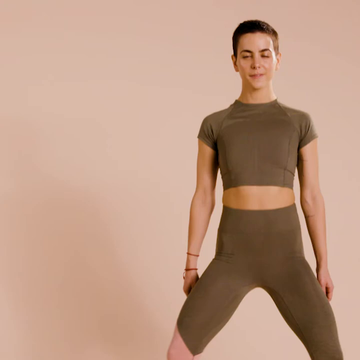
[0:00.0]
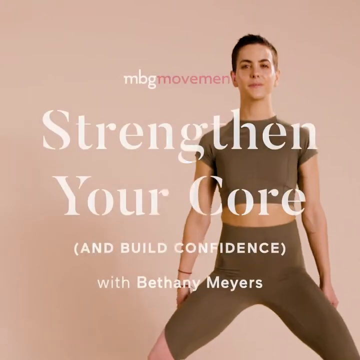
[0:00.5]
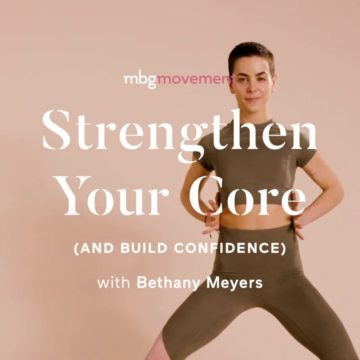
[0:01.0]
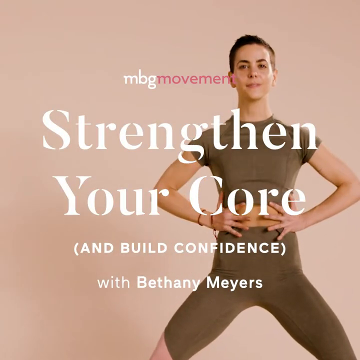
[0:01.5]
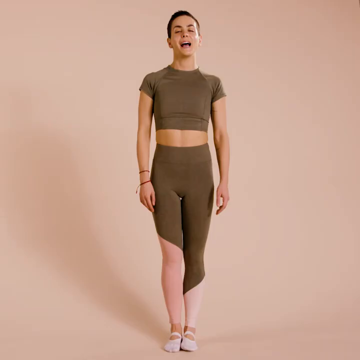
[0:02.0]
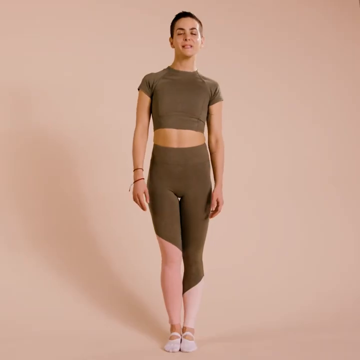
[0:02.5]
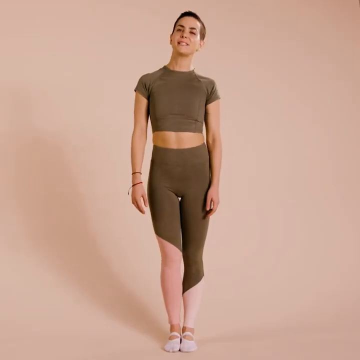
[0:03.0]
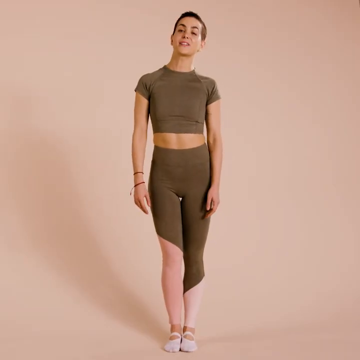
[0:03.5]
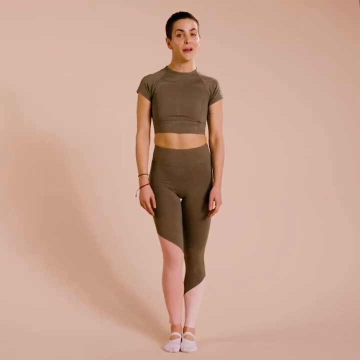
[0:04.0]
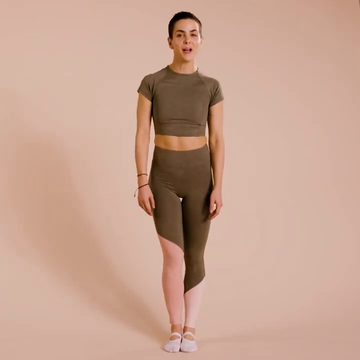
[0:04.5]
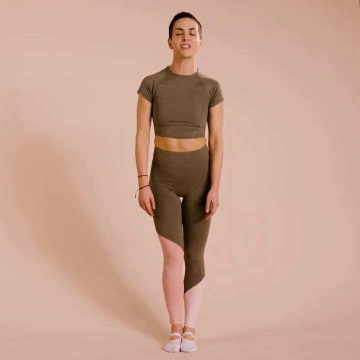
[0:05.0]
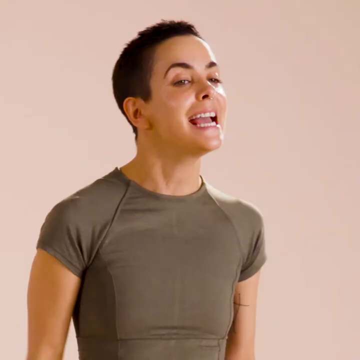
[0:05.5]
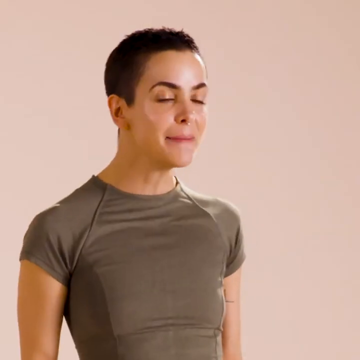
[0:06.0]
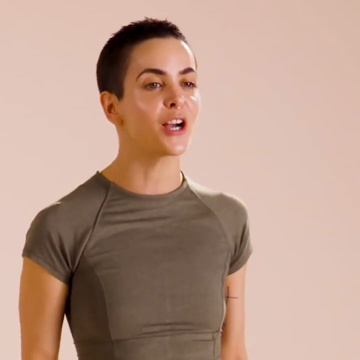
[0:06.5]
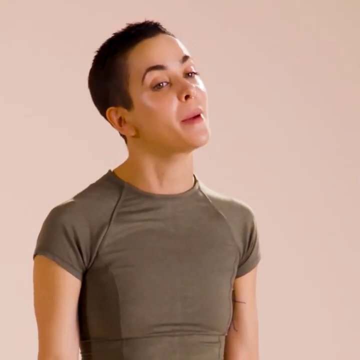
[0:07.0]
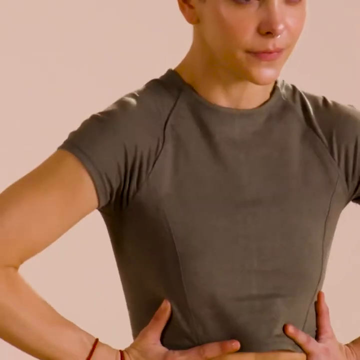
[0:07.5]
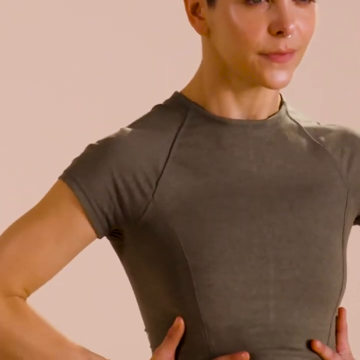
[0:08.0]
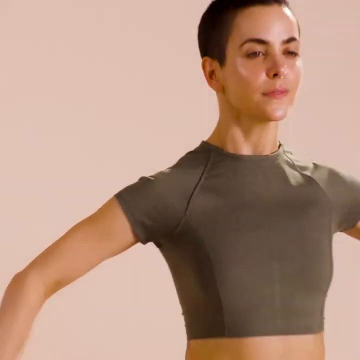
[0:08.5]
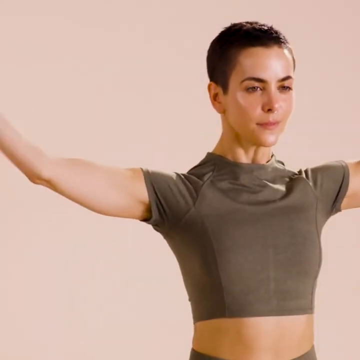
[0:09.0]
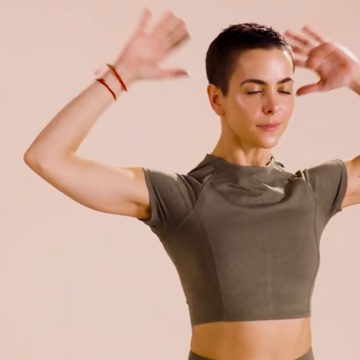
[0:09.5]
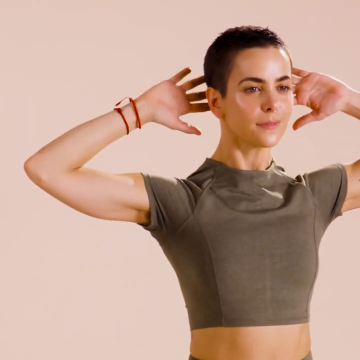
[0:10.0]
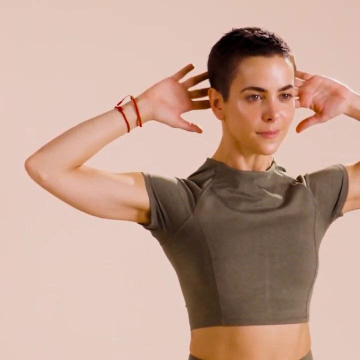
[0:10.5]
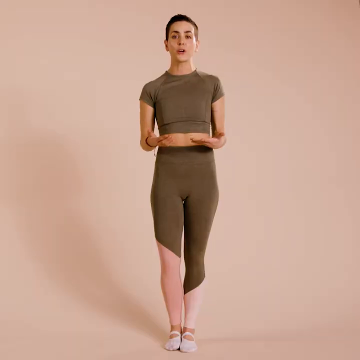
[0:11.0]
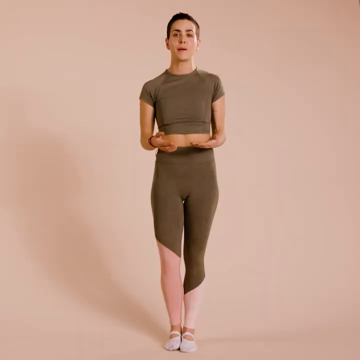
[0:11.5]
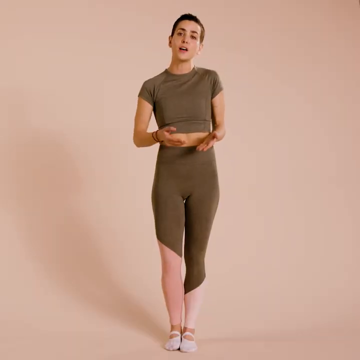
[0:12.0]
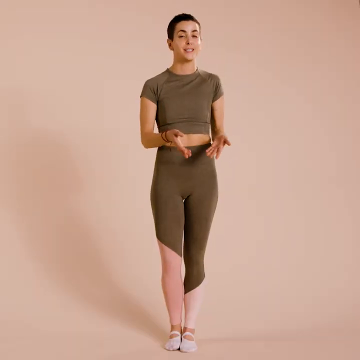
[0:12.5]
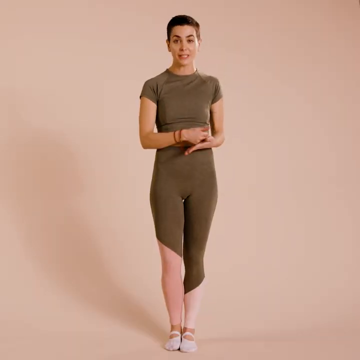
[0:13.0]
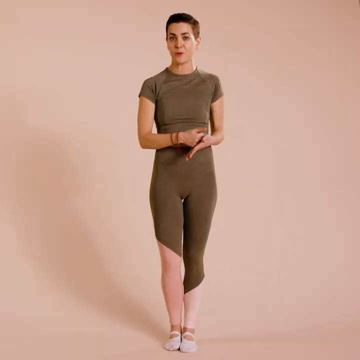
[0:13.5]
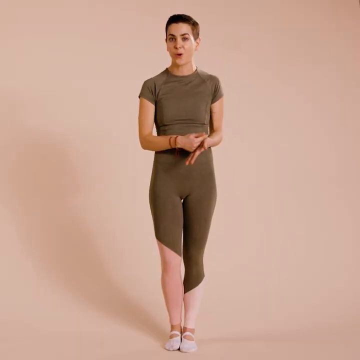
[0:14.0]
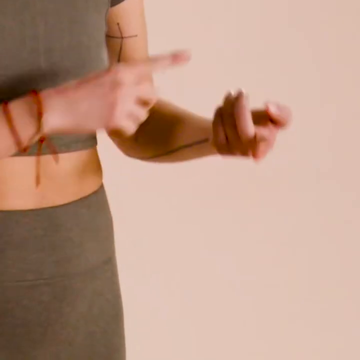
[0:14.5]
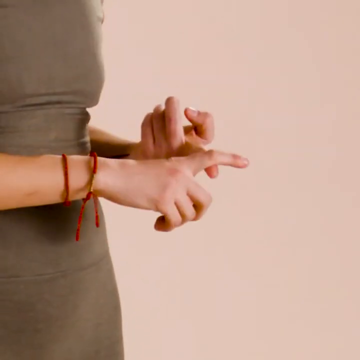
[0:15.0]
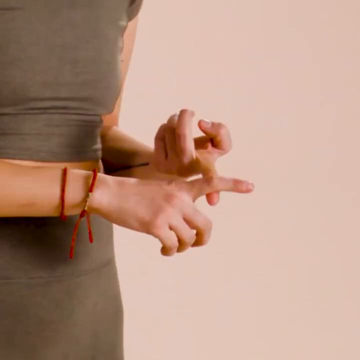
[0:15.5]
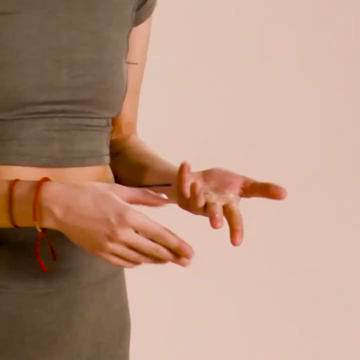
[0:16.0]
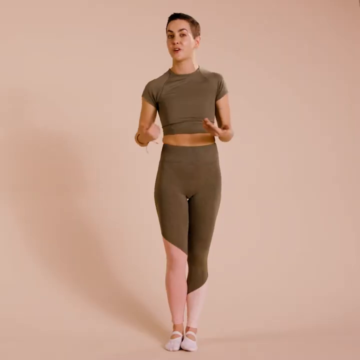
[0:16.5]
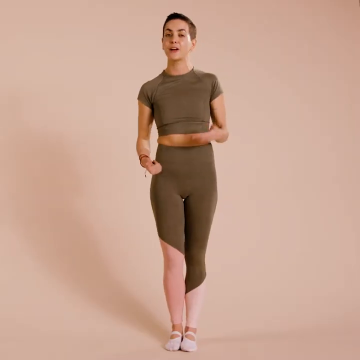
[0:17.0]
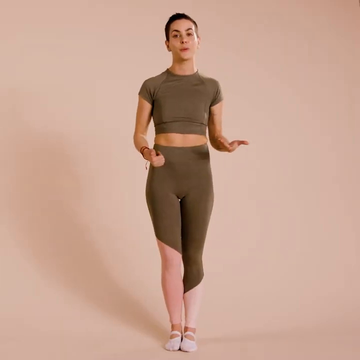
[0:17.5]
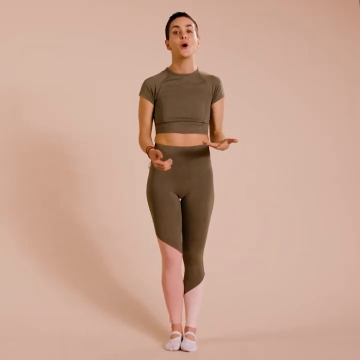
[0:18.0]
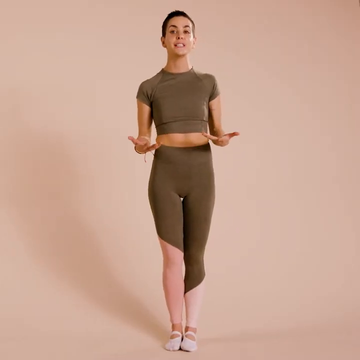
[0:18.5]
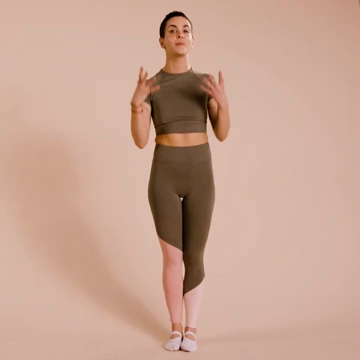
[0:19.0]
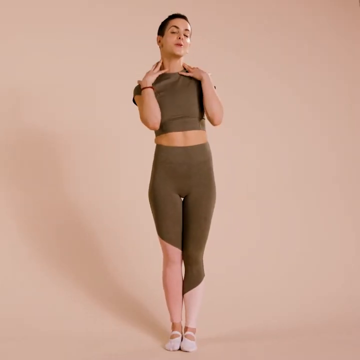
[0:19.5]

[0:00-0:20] The video is from MBG Movement and seems to be an instructional video about strengthening the core by someone named Bethany Myers, titled Strengthen Your Core (and Build Confidence). It begins with the instructor in khaki fitness wear, standing with her legs apart and knees slightly bent; she grabs her waist and cinches in her core. The next shot shows her standing normally in a full-body view, wearing khaki clothes with tights that are khaki and pink, speaking to the camera. Some shots show her from a different angle as she continues to speak, and she demonstrates movements in which she puts her hands behind her head. Still speaking to the camera, she gestures and counts on her fingers, and red bracelets are visible on her right hand. The full-body view returns as she gestures with her hands and refers to her neck.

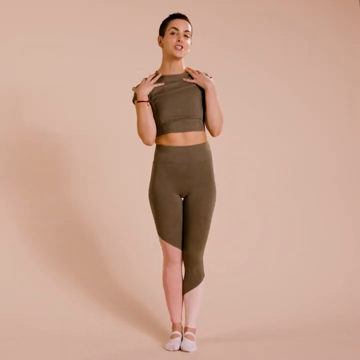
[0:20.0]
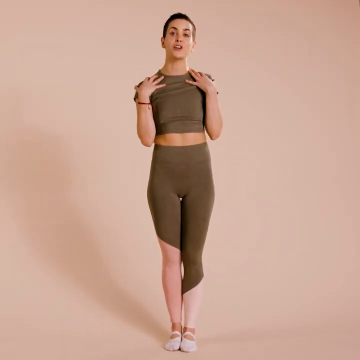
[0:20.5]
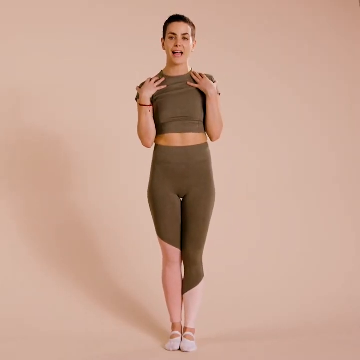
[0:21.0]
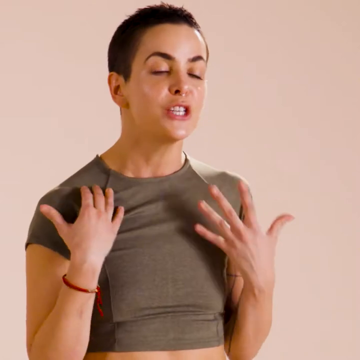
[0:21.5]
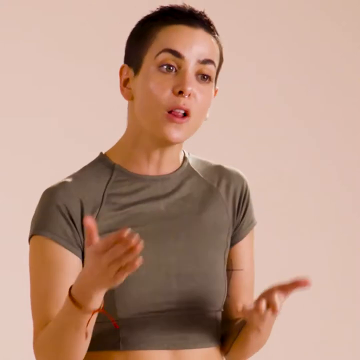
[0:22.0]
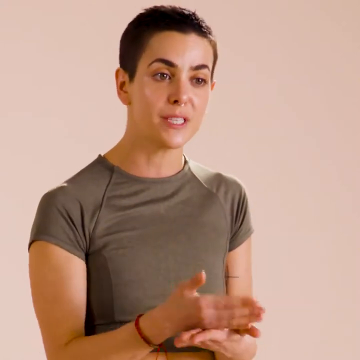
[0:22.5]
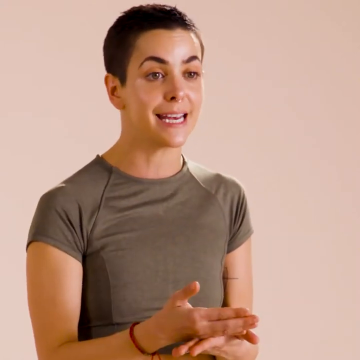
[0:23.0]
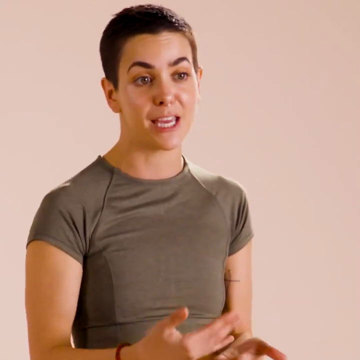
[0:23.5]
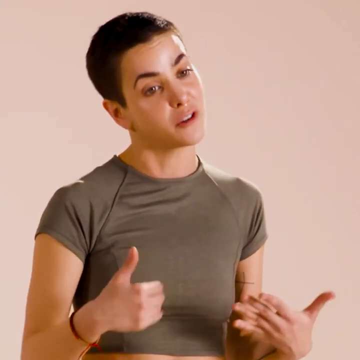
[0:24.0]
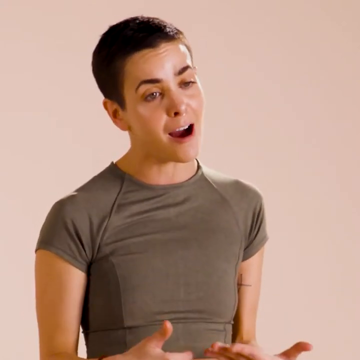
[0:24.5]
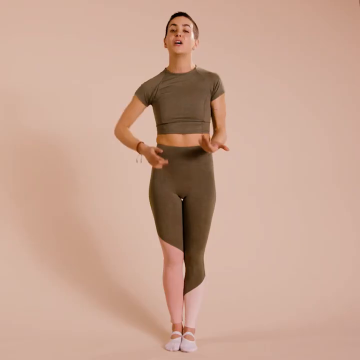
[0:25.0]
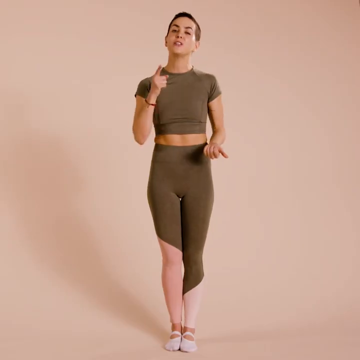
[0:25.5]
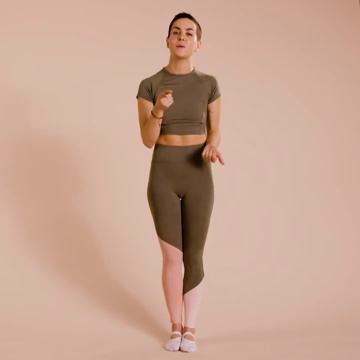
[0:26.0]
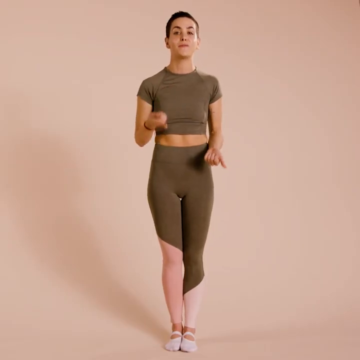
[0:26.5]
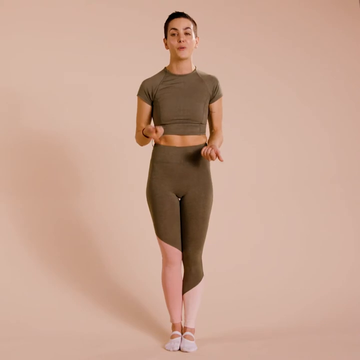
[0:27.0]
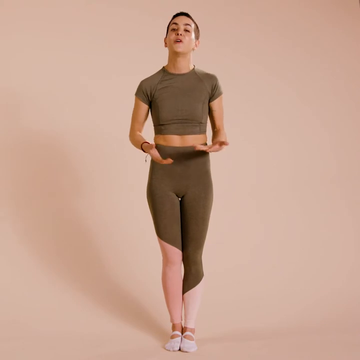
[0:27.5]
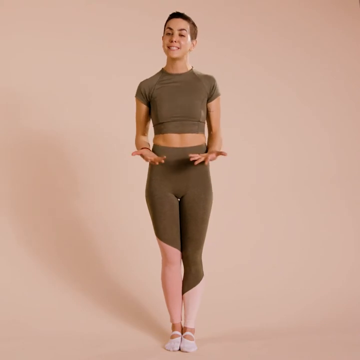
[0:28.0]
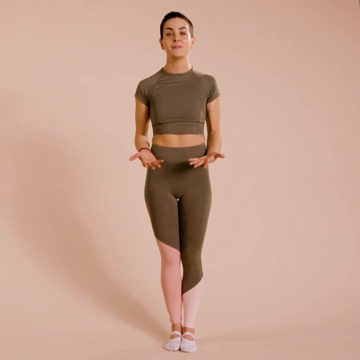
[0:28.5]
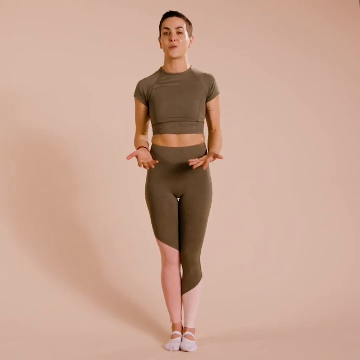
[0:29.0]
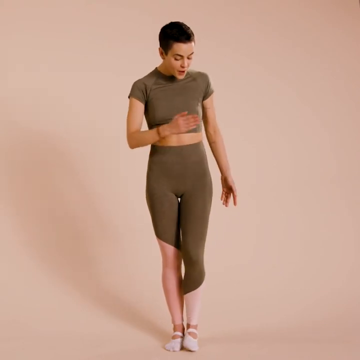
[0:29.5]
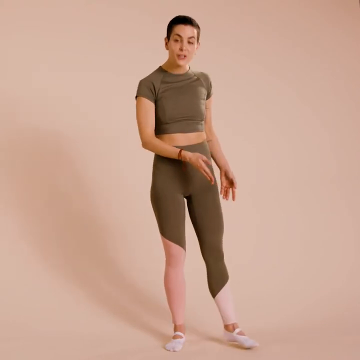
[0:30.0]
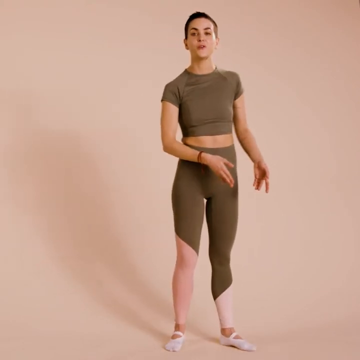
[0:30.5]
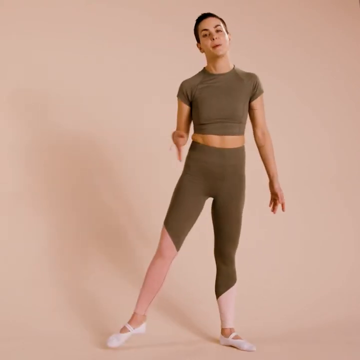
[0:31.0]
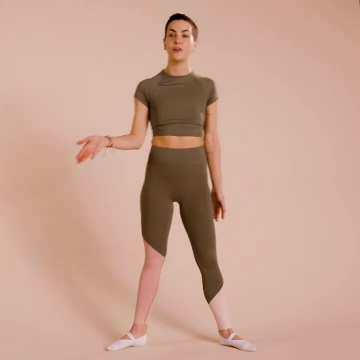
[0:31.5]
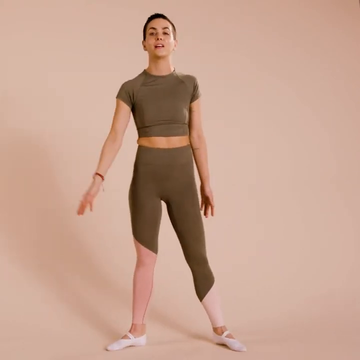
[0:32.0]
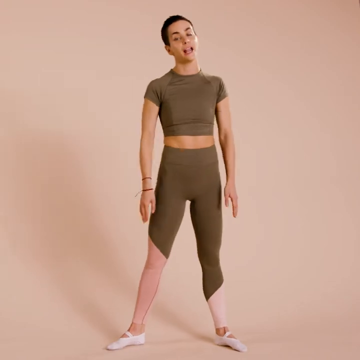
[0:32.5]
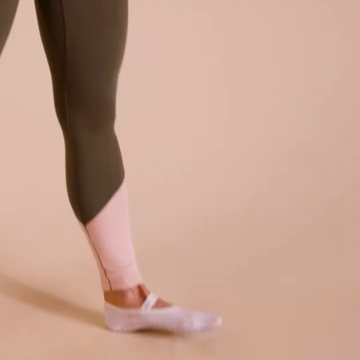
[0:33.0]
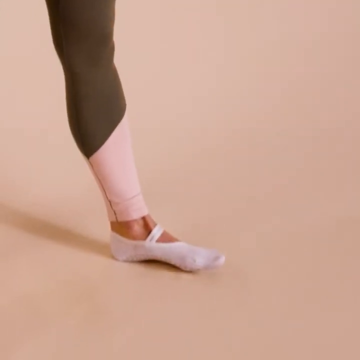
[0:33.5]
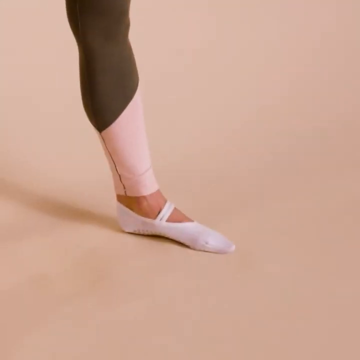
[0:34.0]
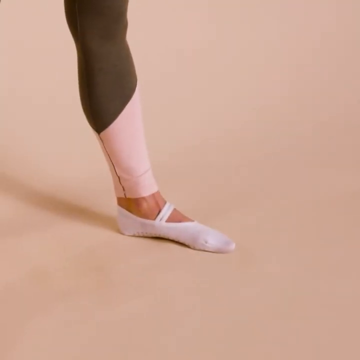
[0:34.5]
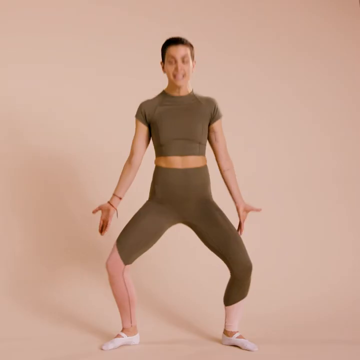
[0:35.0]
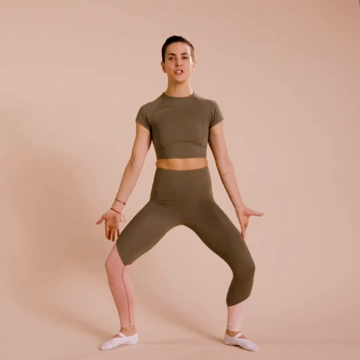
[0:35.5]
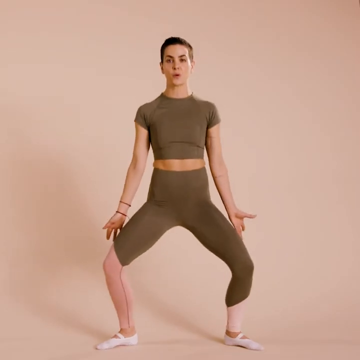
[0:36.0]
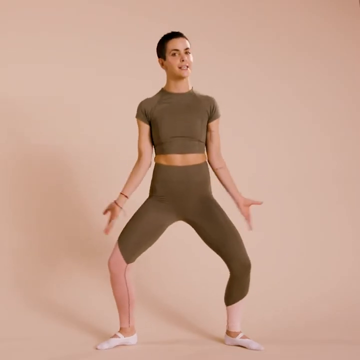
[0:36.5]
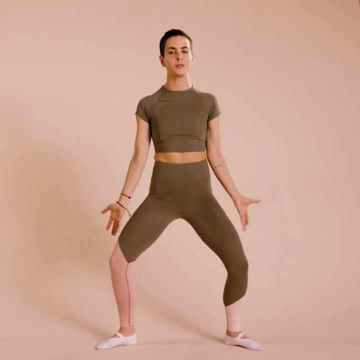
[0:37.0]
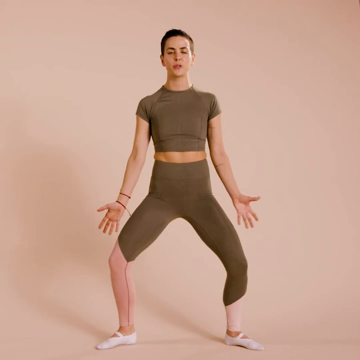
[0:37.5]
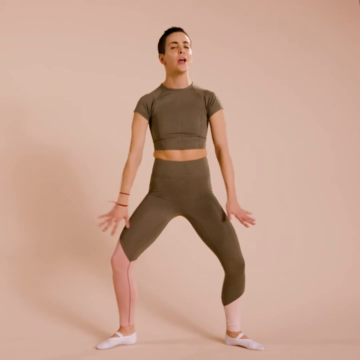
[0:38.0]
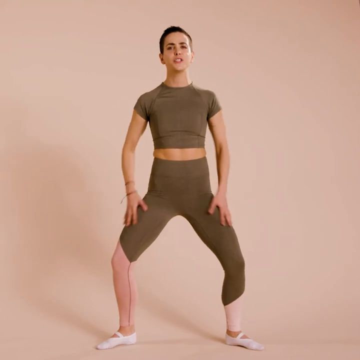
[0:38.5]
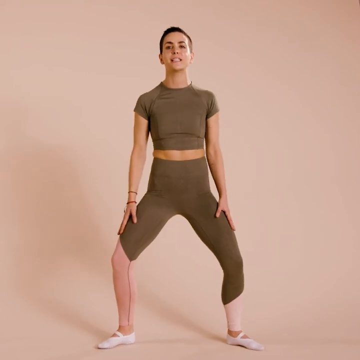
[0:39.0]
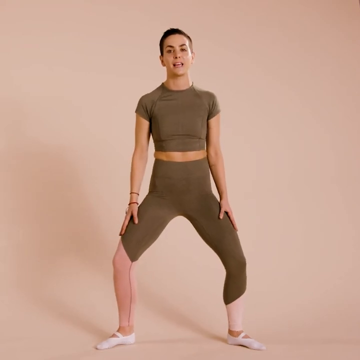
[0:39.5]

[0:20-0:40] She is speaking, having first had her hands on her chest, and now gestures them toward the camera. She places her right hand on top of her left hand and uses a cutting motion to emphasize a point, then points to herself with both hands. She points her right hand toward the camera, toward the viewer, and makes up-and-down motions with her hands. Eventually she uses her right hand to point toward her left and right feet as she widens them and takes on a stance. She wears white grippy socks, and the camera pans toward her left foot. In another shot she slightly bends her knees to lower herself toward the ground into a slight squat, and she rubs her legs to gesture toward them. It seems they are preparing for a movement by getting familiar with the body and breaking down which parts of the body should move to take on the stance.